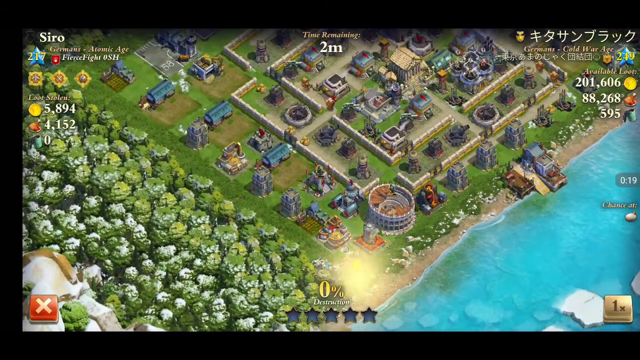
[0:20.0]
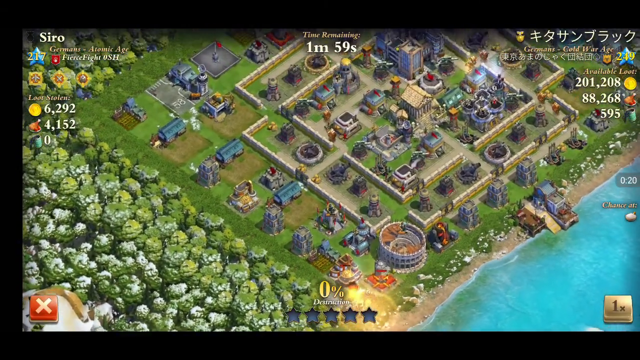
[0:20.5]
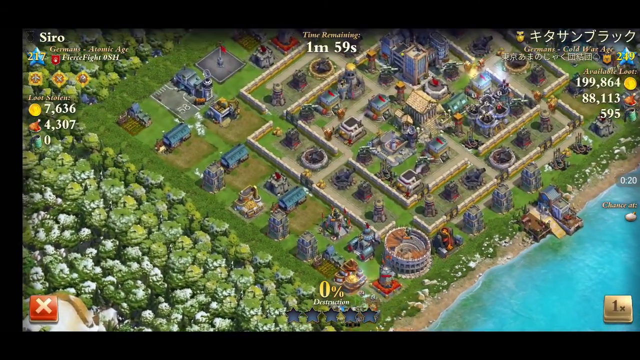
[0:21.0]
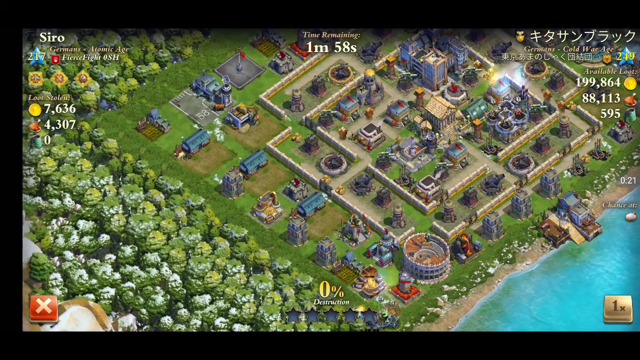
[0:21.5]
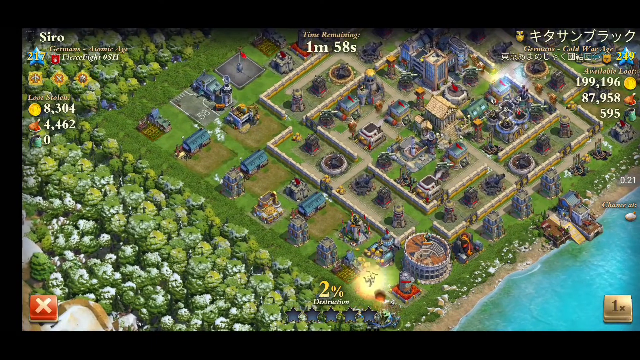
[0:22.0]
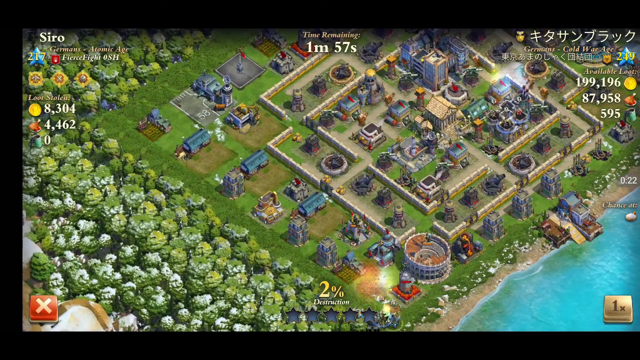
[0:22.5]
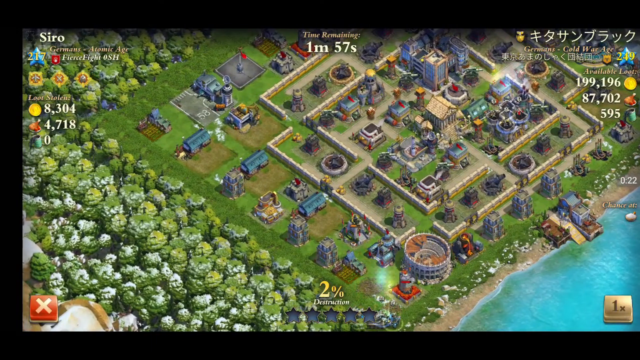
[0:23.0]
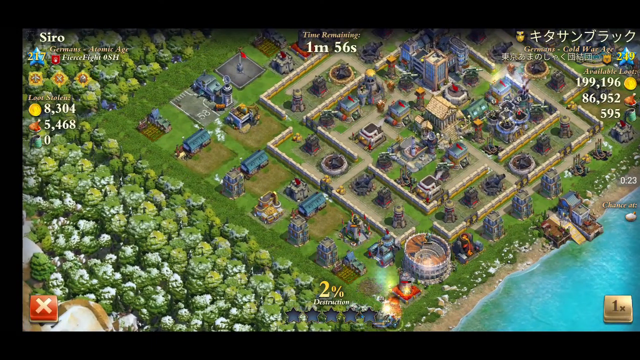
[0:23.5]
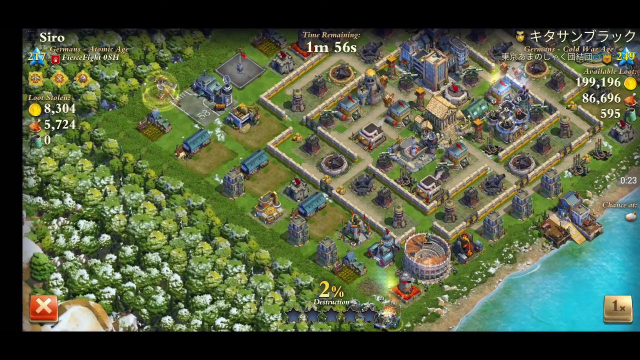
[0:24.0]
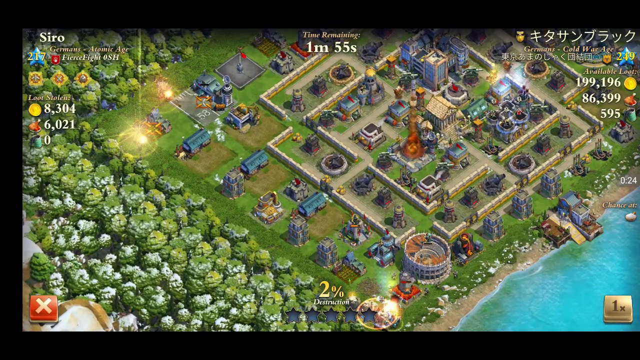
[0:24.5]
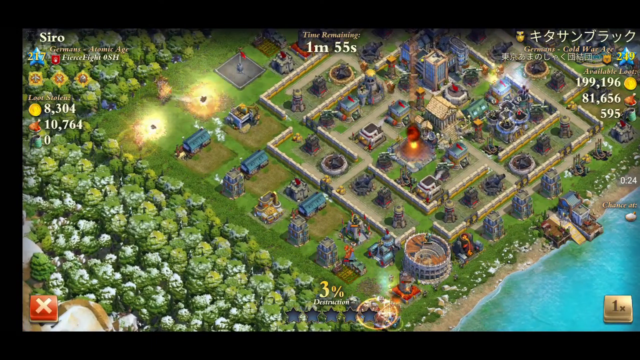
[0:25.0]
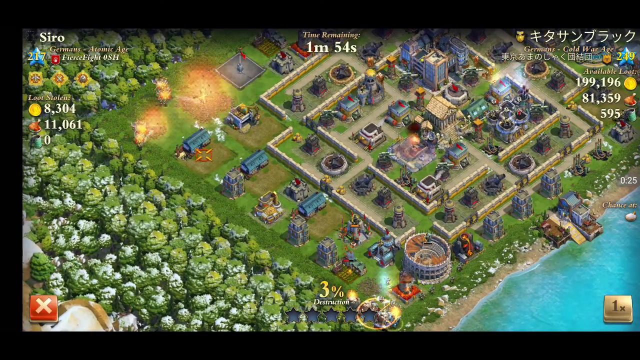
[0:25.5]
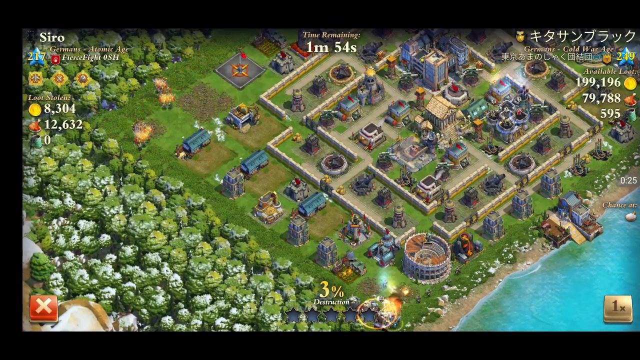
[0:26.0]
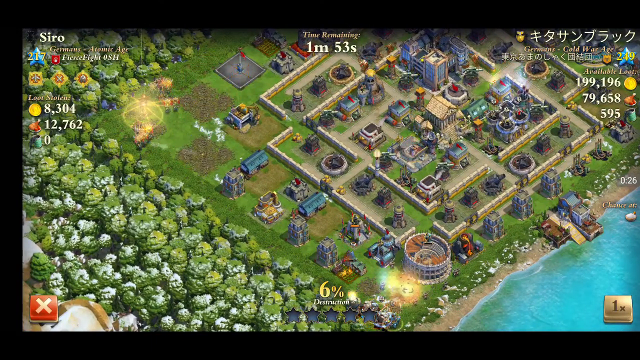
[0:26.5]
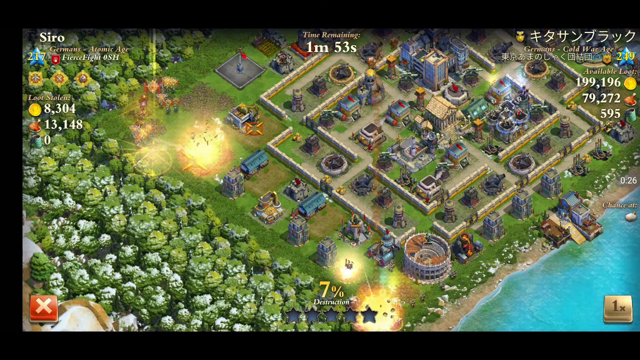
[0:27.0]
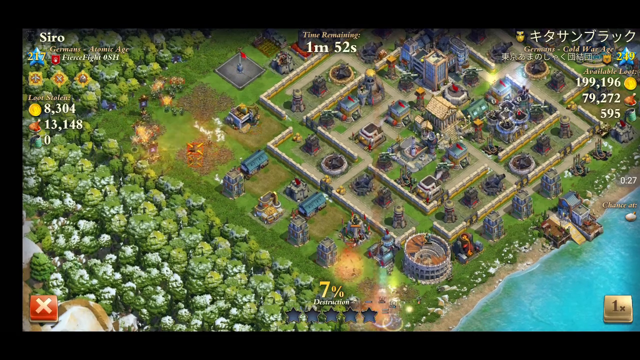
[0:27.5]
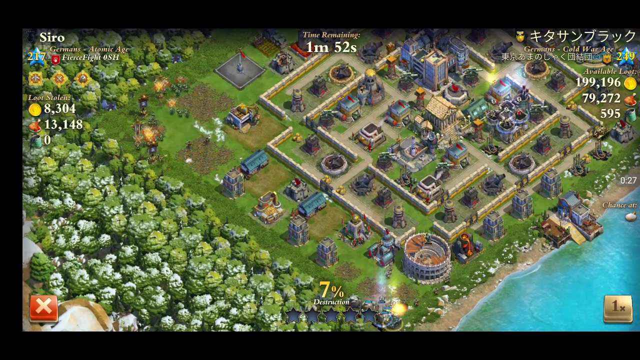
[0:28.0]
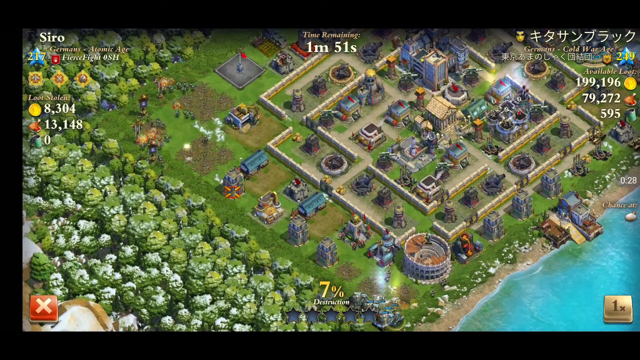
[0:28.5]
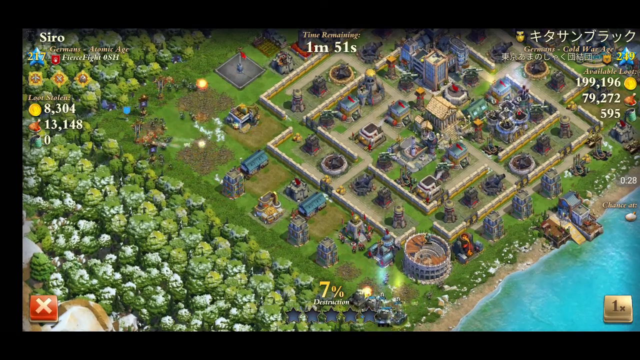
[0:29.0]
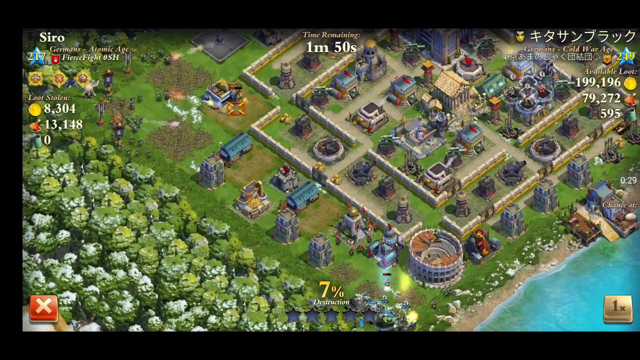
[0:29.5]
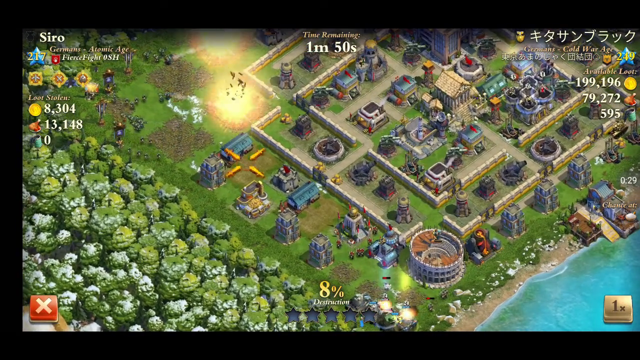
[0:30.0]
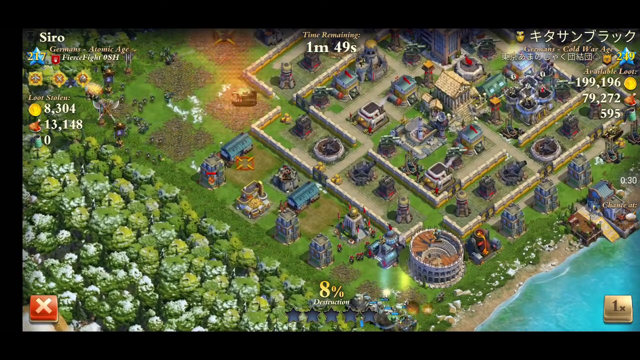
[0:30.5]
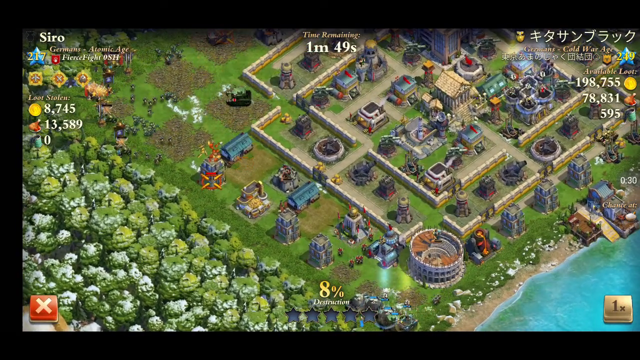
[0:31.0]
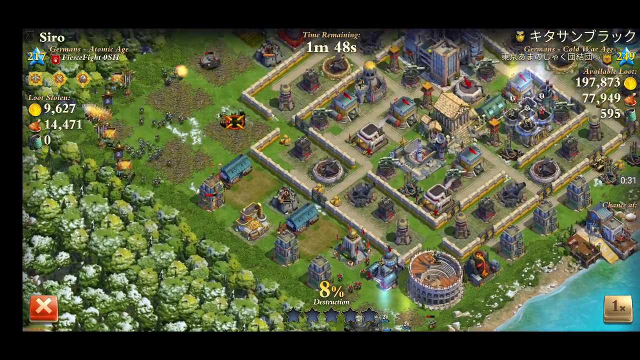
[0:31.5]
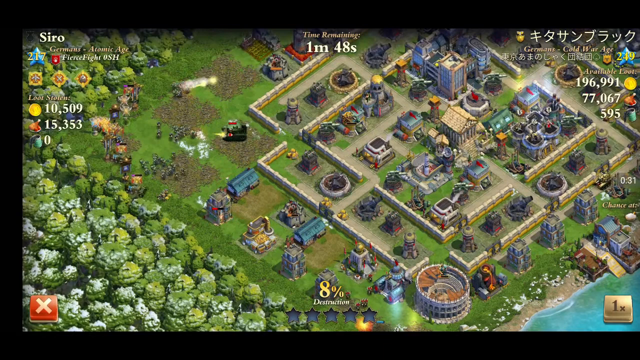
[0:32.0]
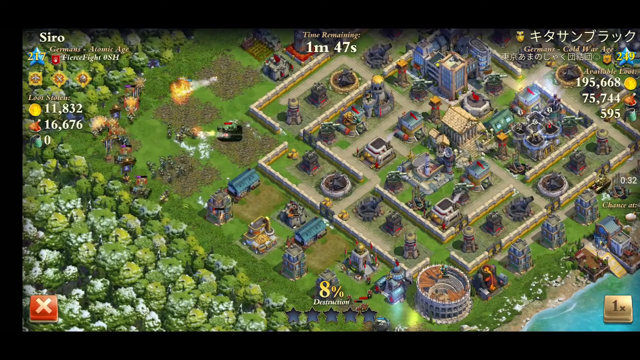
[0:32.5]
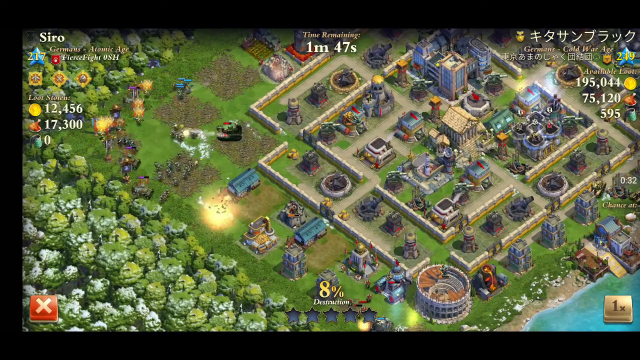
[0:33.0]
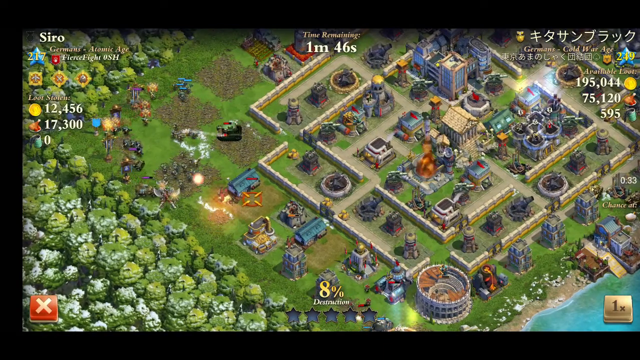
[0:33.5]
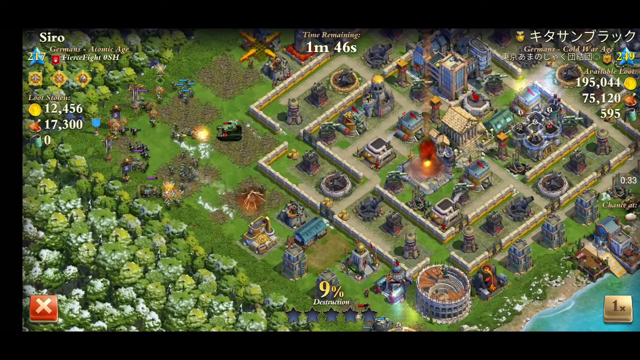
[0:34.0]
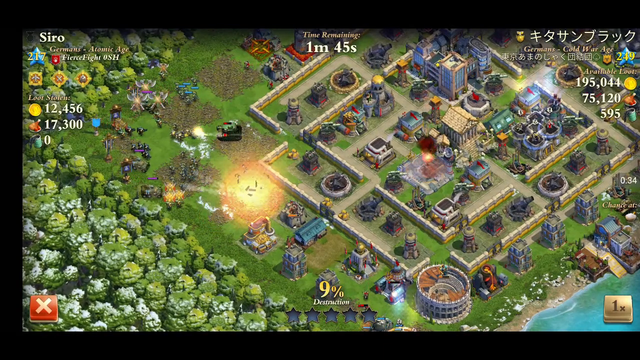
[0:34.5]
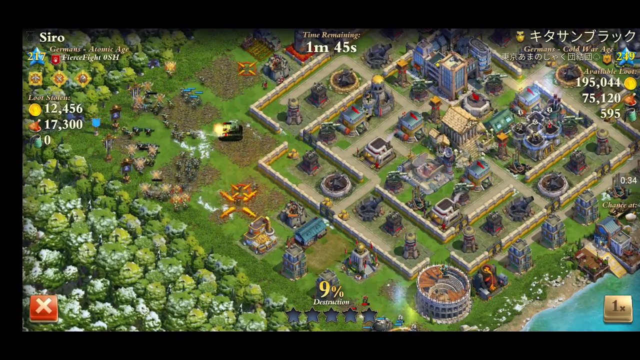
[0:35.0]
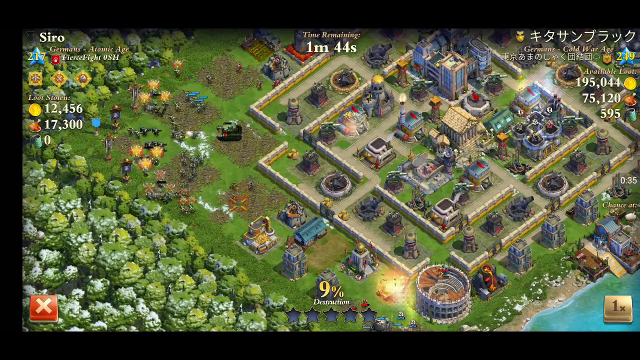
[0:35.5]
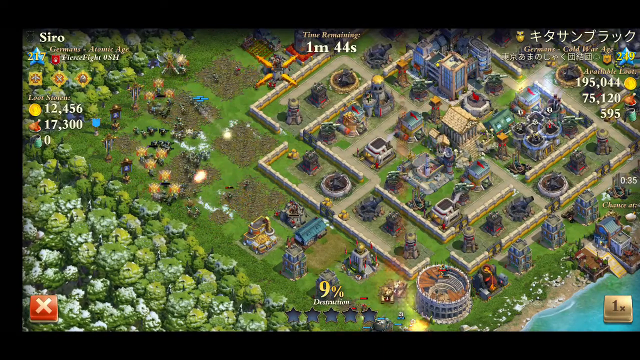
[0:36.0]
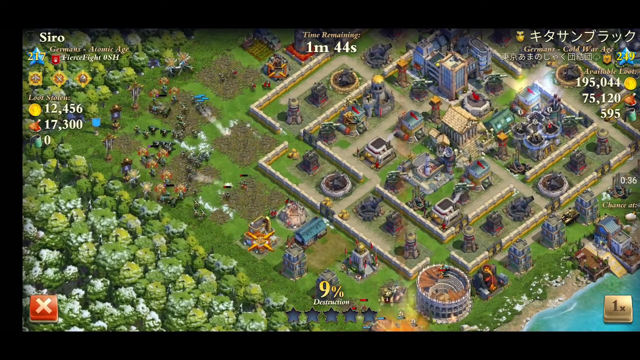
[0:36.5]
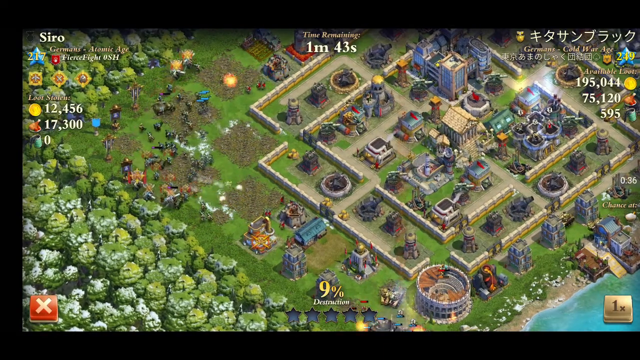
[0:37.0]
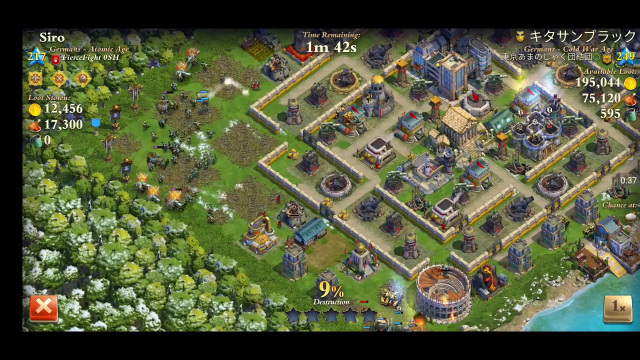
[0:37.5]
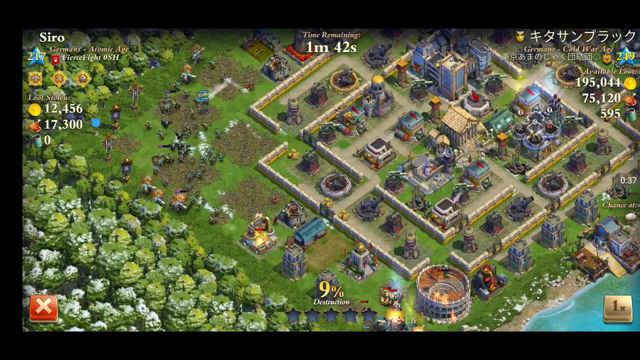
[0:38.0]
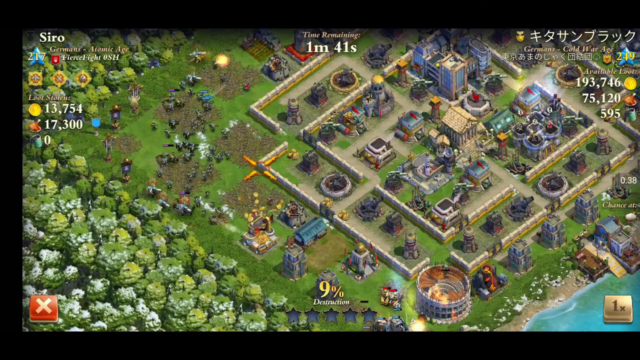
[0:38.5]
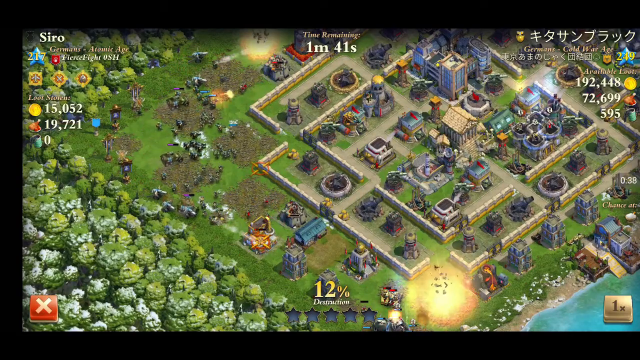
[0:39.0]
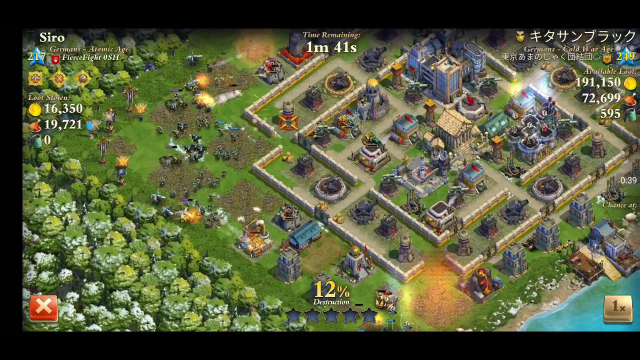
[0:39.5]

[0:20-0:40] Early on, the attacking player's initial tank assault destroys quite a few buildings as the tanks come in. Another attack is launched at the top of the map with infantry, which destroy some of the exterior buildings just outside the walls of the defending player's base. The attack appears to be going well so far. Some defense starts to come out: one or two tanks emerge from the defender's base but seem to be destroyed quickly, along with some infantry toward the top of the wall, which seem to still be going up for the time being. A time remaining counter is shown at the top. A destruction indicator shows how much of the base has been destroyed overall, and a loot tracker to the side shows how much loot has been stolen in the raid.